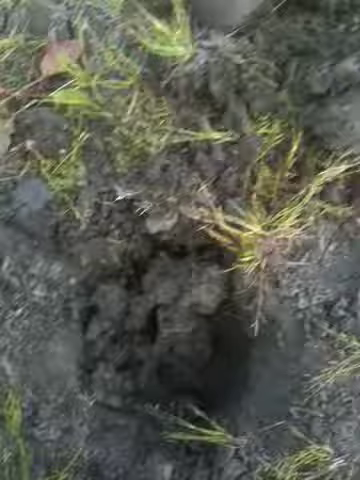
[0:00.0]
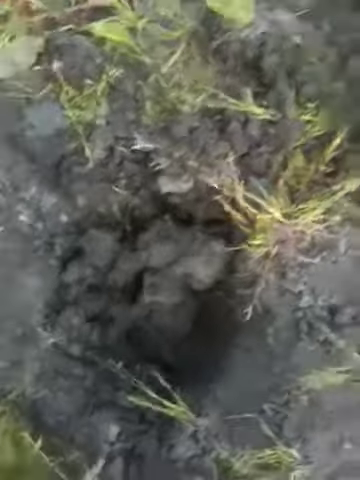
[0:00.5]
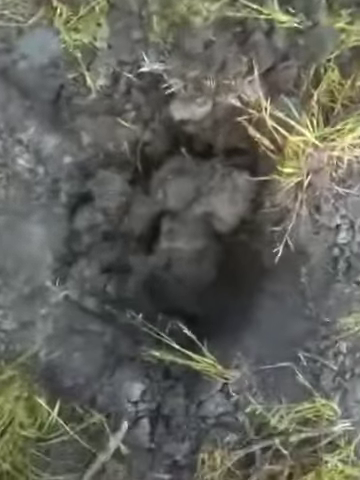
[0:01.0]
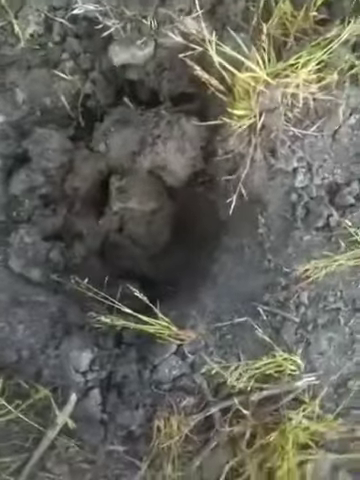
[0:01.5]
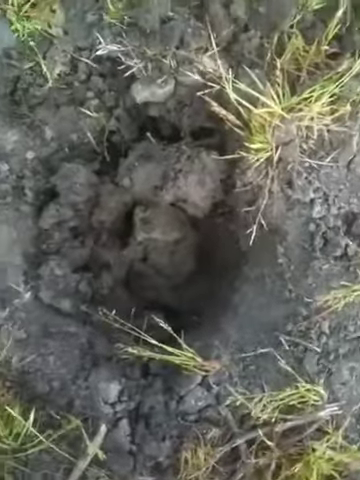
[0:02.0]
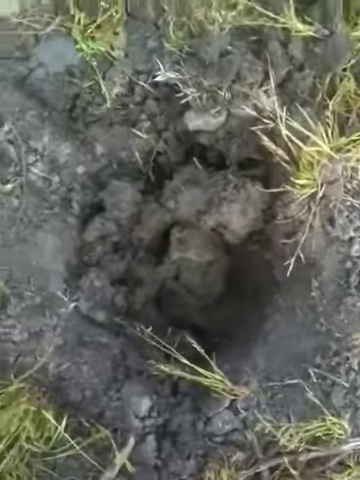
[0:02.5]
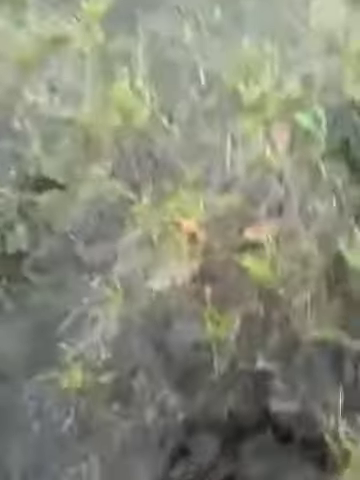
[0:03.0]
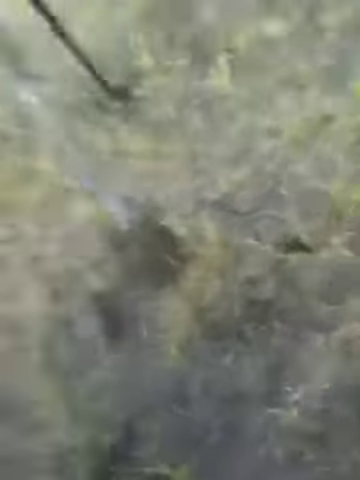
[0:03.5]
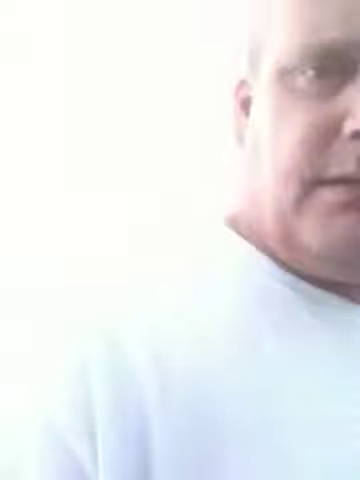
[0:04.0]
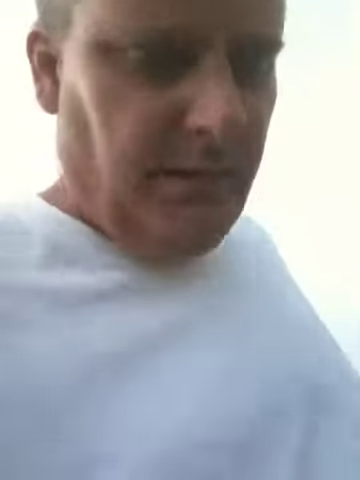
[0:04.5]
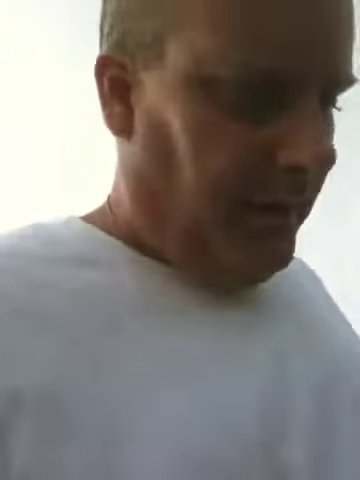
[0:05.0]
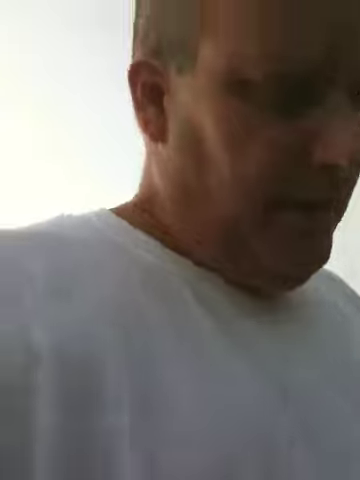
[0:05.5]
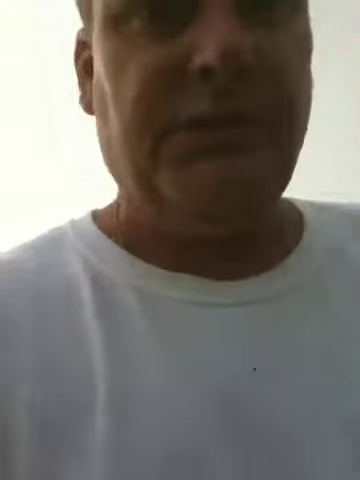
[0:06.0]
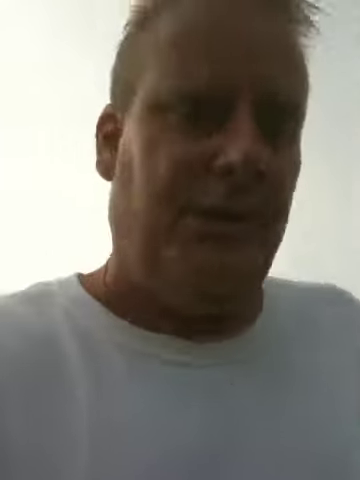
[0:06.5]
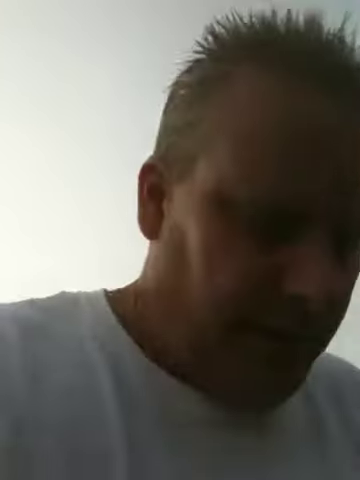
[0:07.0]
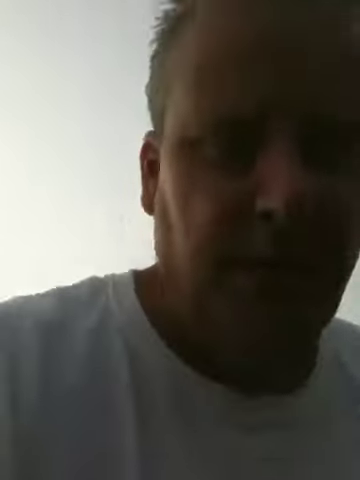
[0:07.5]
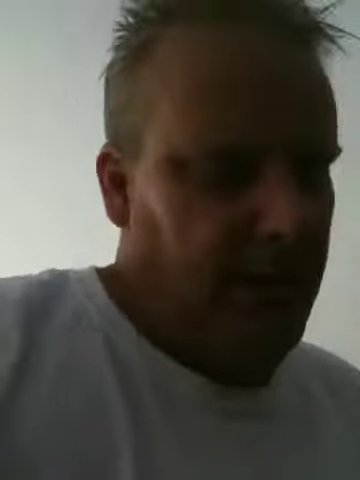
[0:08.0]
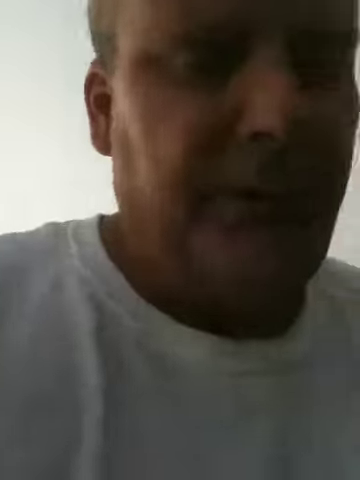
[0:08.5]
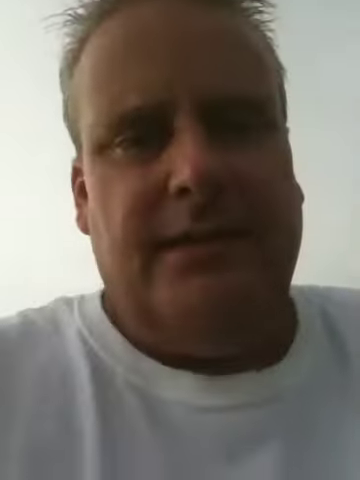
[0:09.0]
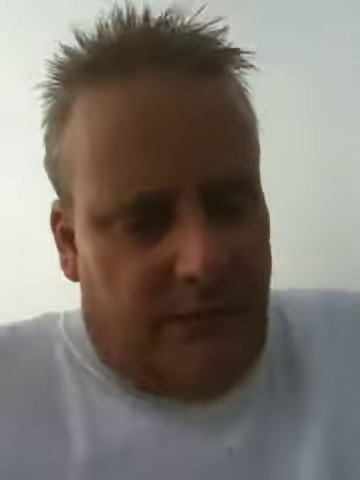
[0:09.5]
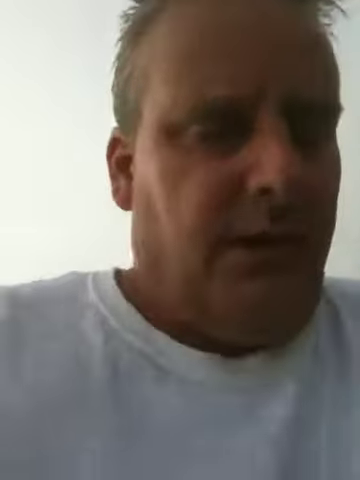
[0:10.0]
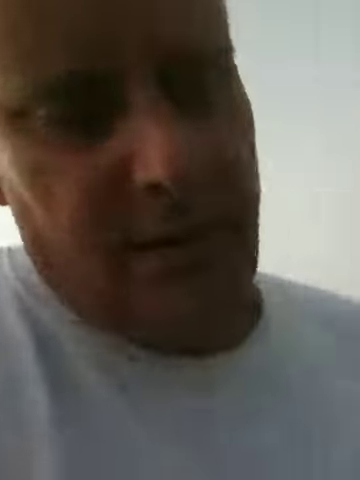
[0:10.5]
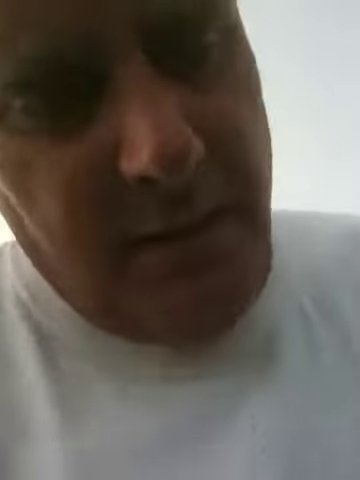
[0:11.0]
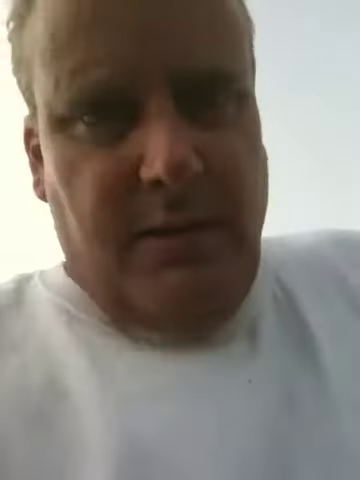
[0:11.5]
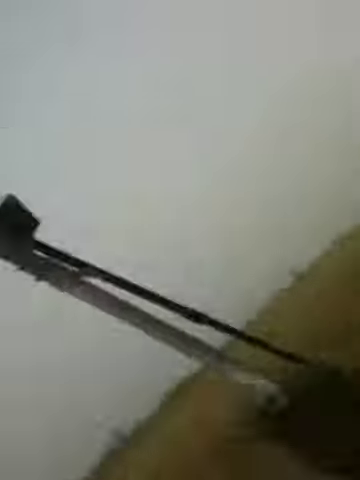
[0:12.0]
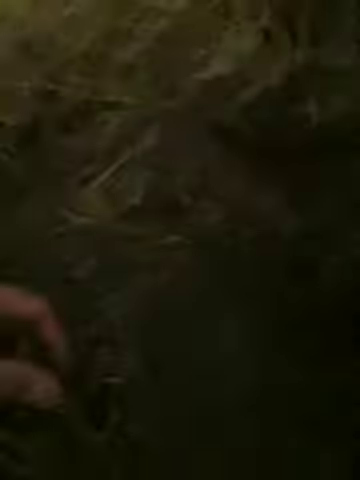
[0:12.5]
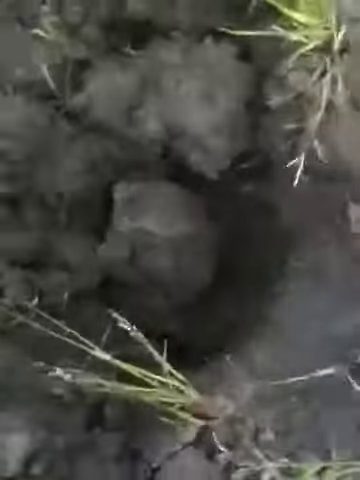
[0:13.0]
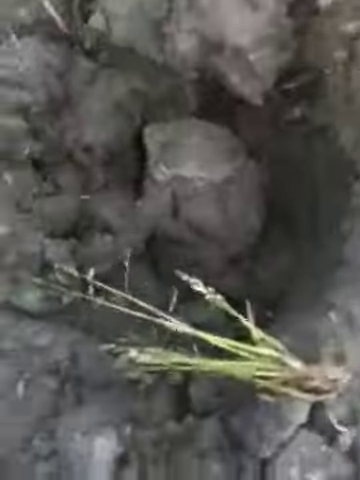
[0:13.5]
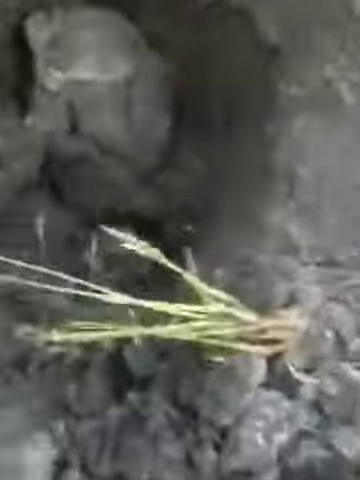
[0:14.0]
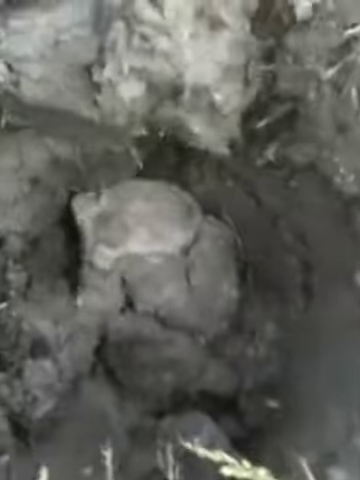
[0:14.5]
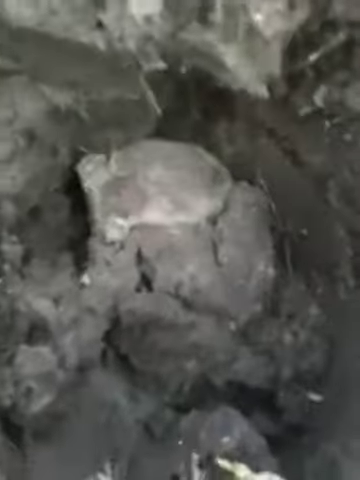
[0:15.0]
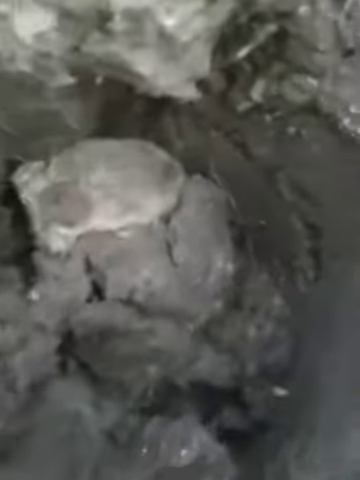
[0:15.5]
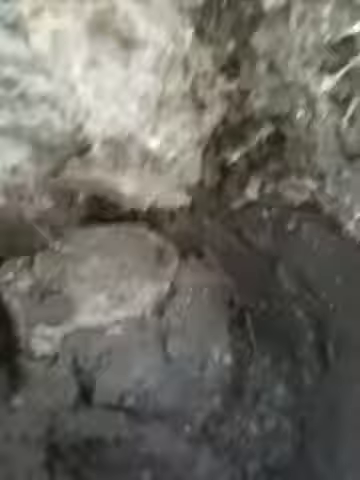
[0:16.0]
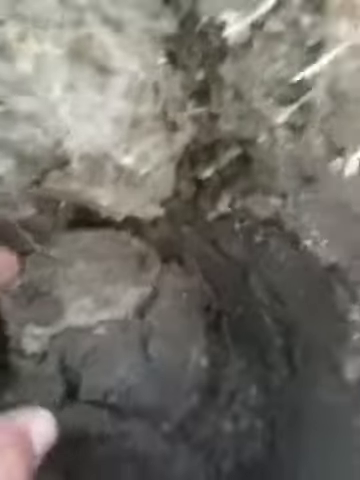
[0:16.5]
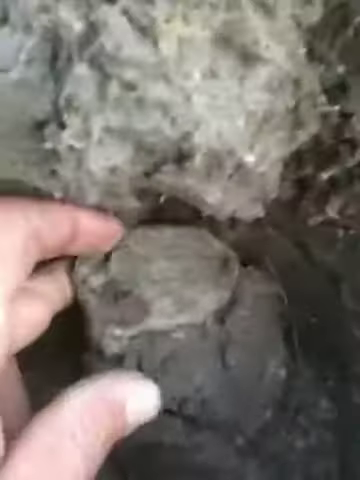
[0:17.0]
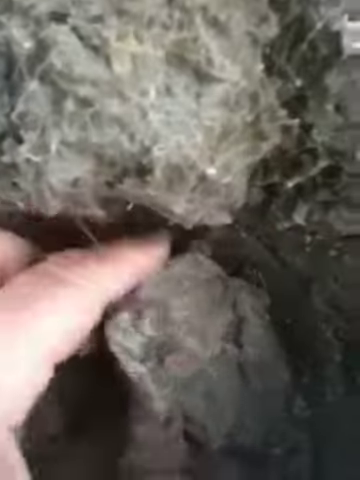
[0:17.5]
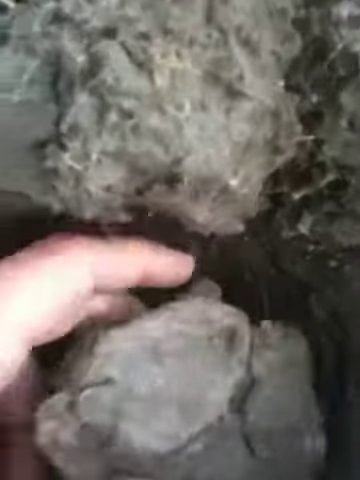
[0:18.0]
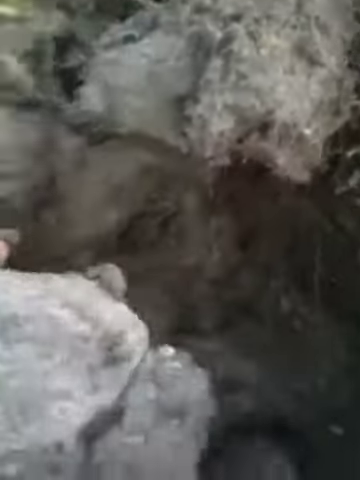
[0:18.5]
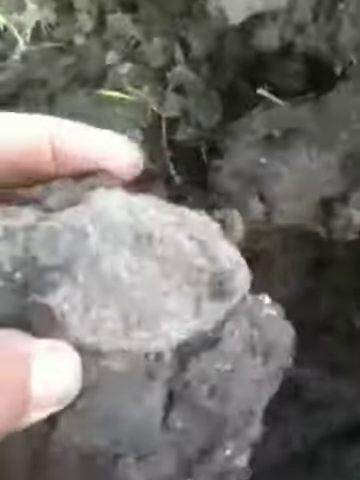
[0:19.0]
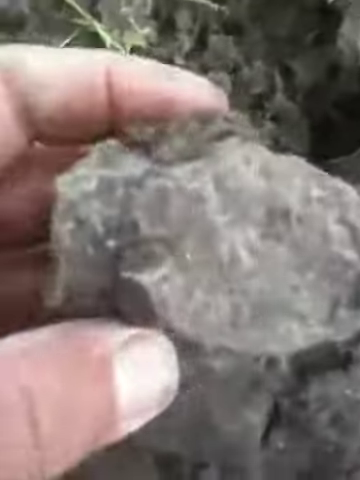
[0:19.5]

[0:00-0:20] The video opens on dirt in a hole in the ground, in late afternoon or in a shaded area, with a number of grass sprouts around the hole. As the video focuses in on the hole, the camera transitions up as the person moves the phone up and looks toward it: a white male with balding grayish hair, wearing a white shirt and a gold necklace. He looks down as he moves and speaks into the camera, then moves the camera over as he looks back down into the hole. It is a muddy gray hole about a foot or slightly less than a foot deep, with rolls of mud packed into it. He zooms in on it as he moves a piece of rock out of the hole on the right side and picks it up. The rock appears somewhat translucent on the left side and might be a fossil or some other type of mineral; its right side and bottom are a more solid color, while the top part is somewhat translucent. The man picks it up with his left hand and moves it over to the left side of the camera.